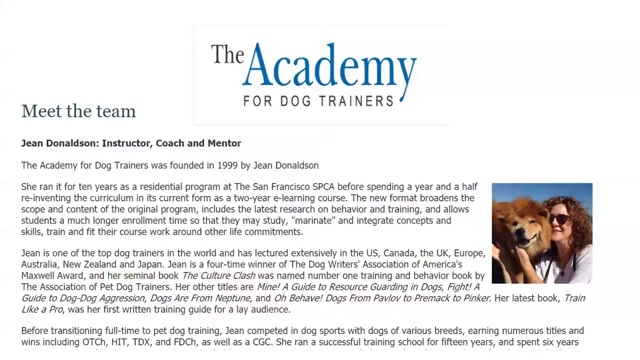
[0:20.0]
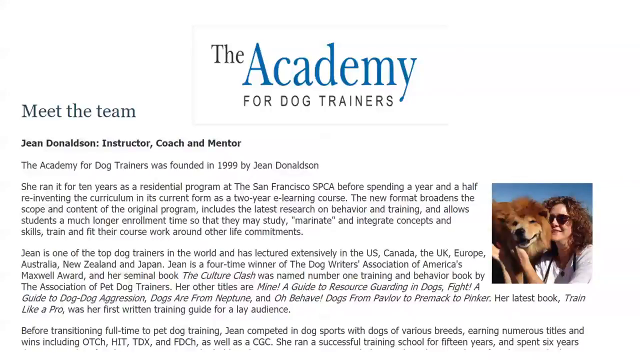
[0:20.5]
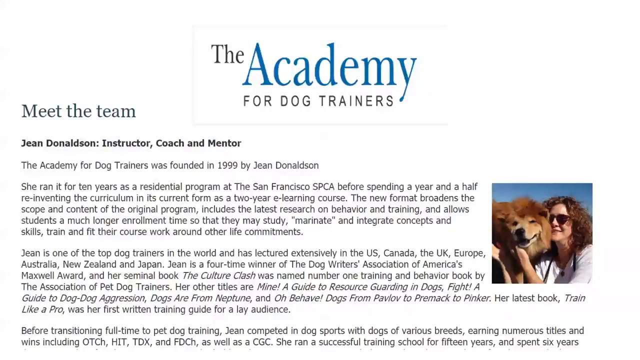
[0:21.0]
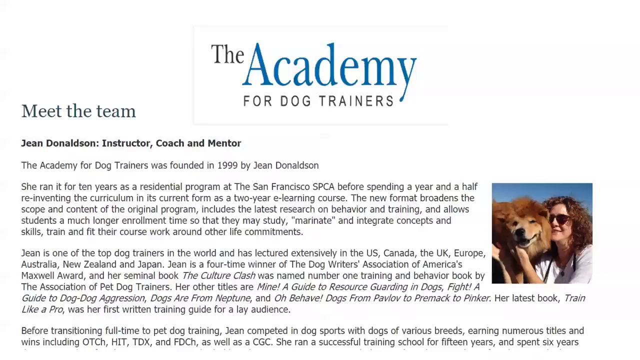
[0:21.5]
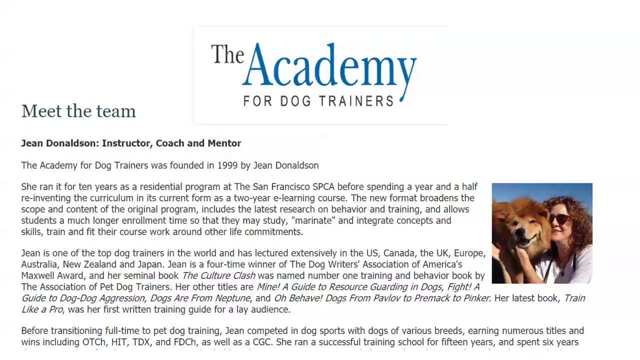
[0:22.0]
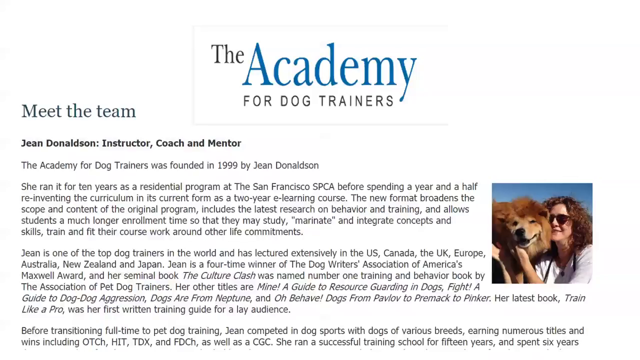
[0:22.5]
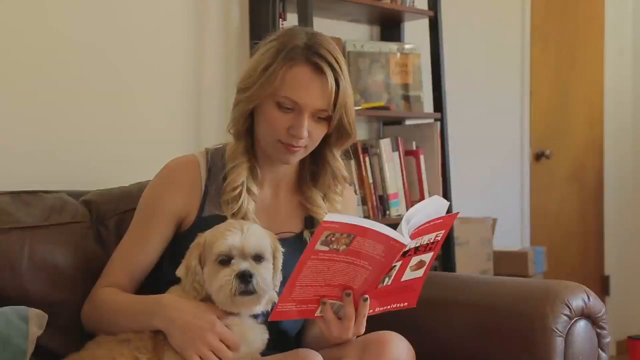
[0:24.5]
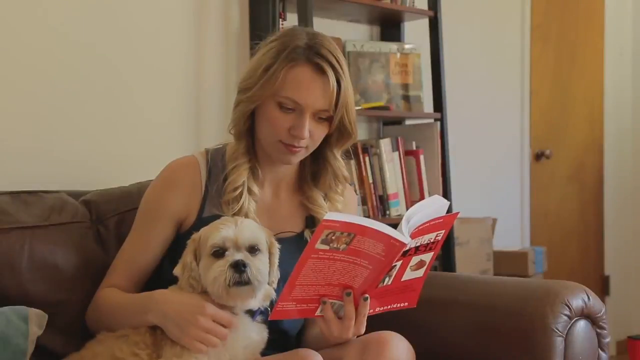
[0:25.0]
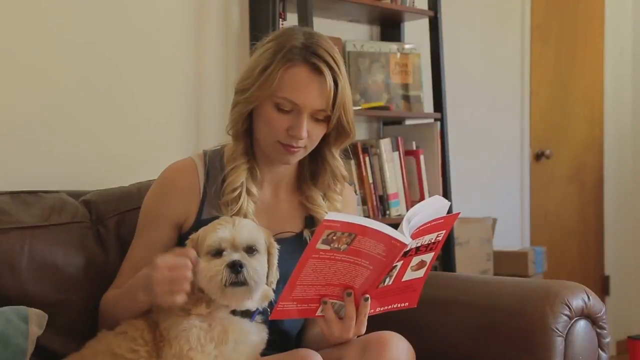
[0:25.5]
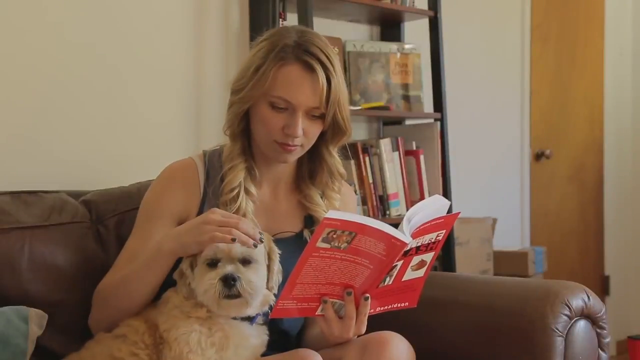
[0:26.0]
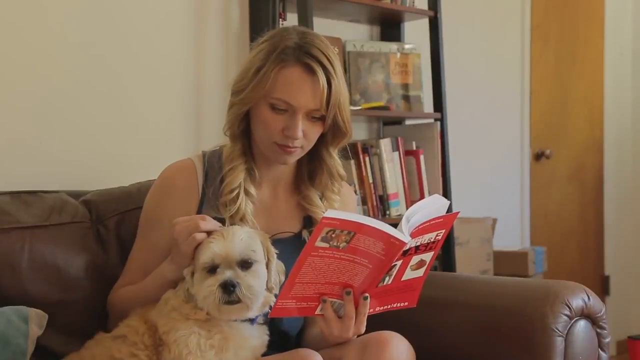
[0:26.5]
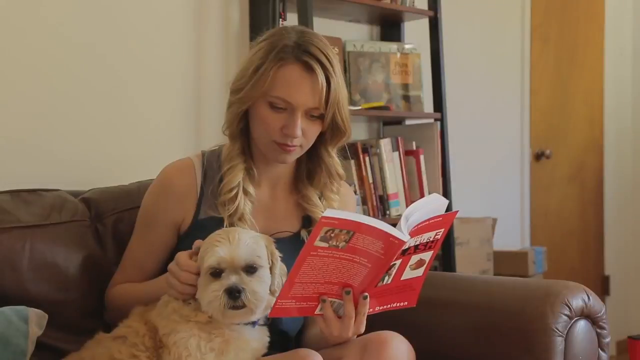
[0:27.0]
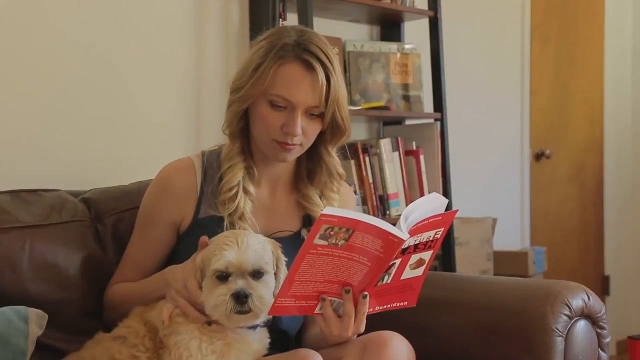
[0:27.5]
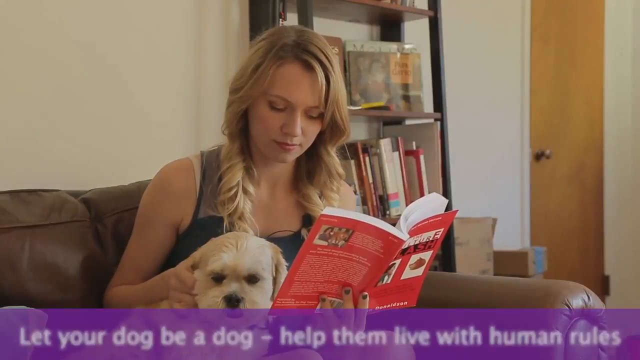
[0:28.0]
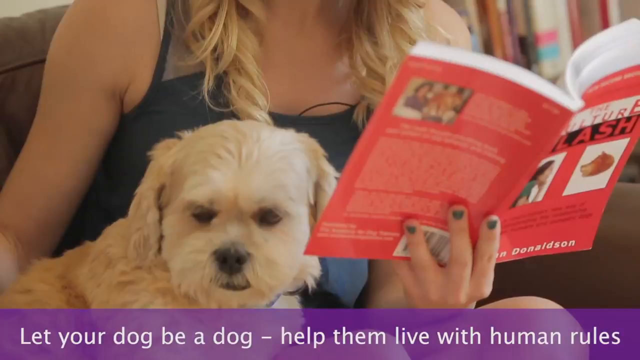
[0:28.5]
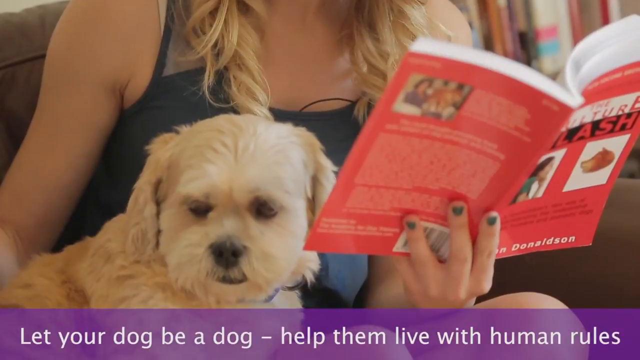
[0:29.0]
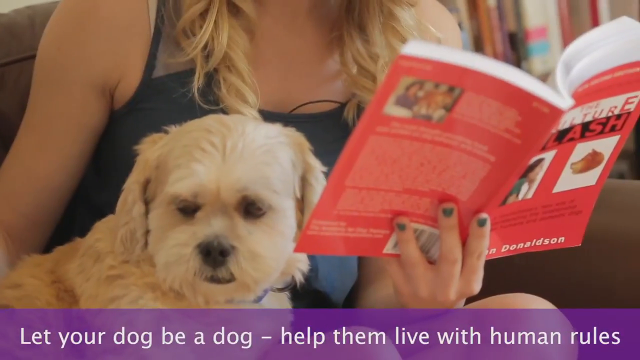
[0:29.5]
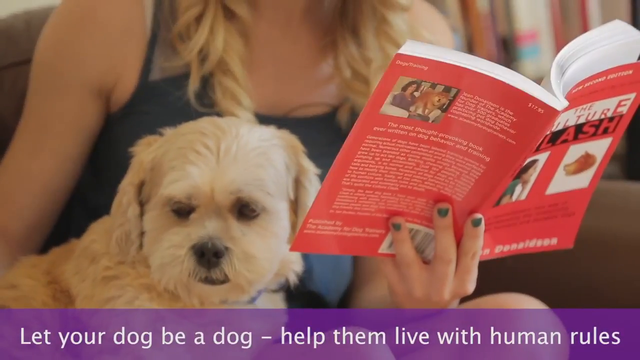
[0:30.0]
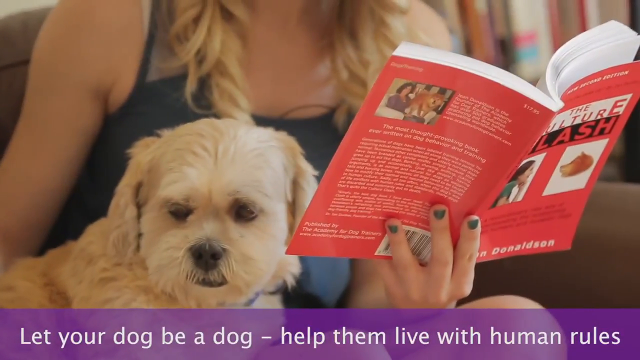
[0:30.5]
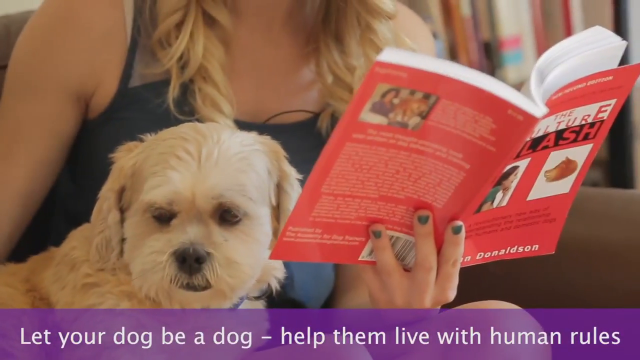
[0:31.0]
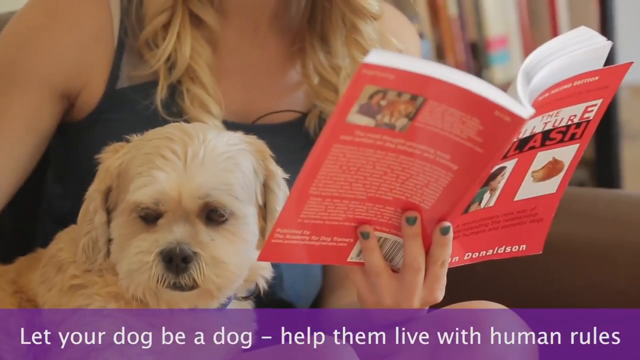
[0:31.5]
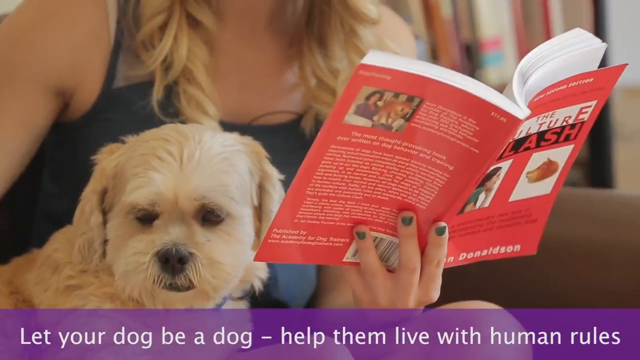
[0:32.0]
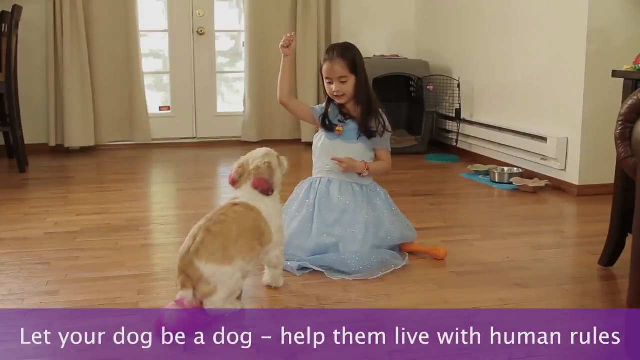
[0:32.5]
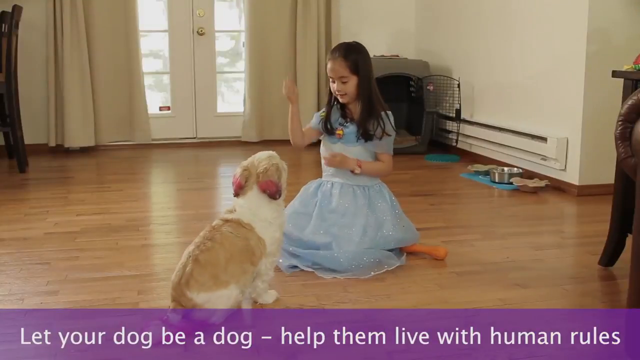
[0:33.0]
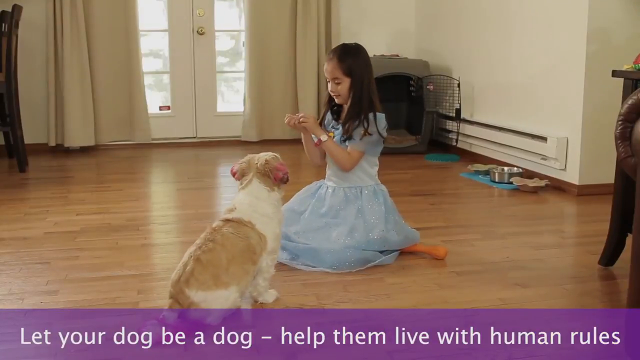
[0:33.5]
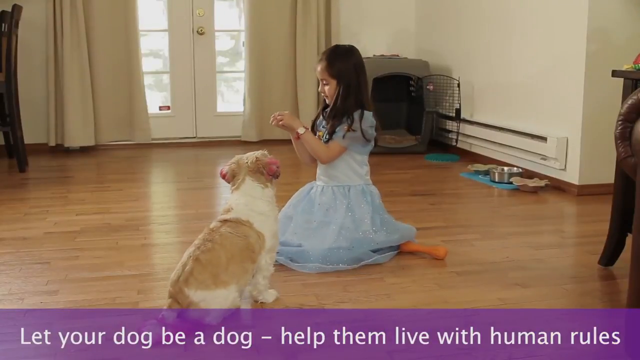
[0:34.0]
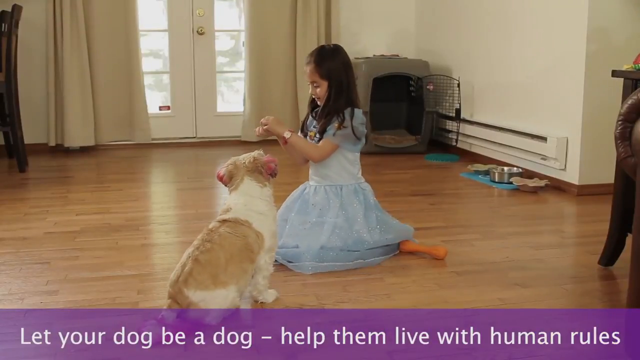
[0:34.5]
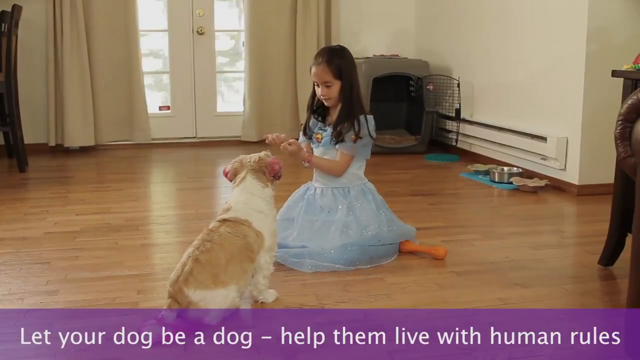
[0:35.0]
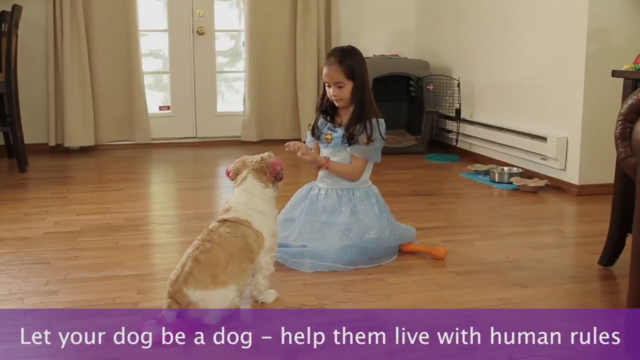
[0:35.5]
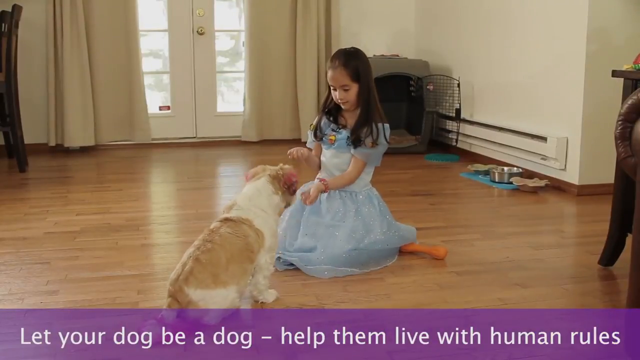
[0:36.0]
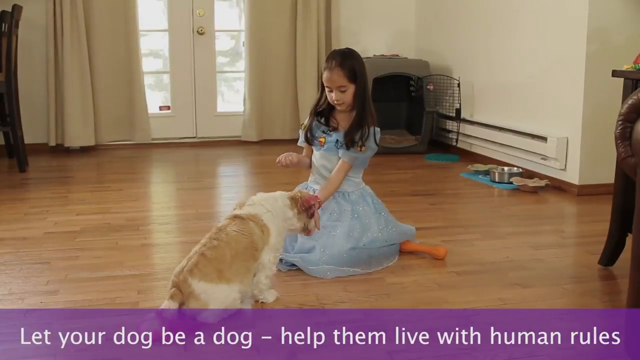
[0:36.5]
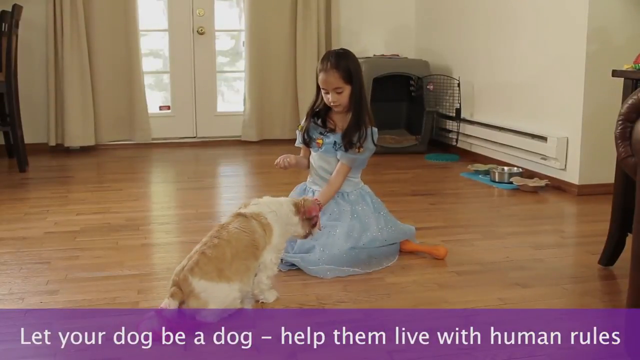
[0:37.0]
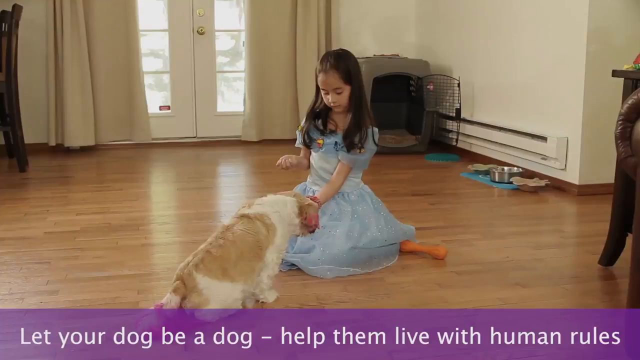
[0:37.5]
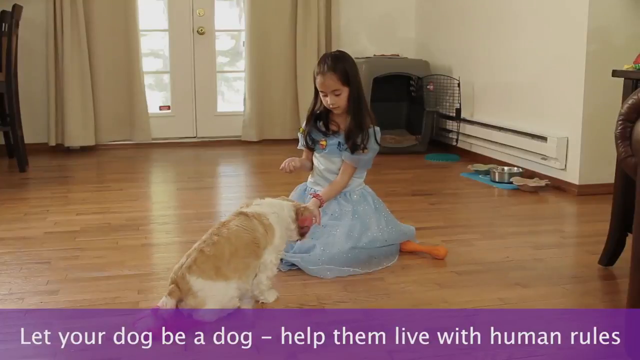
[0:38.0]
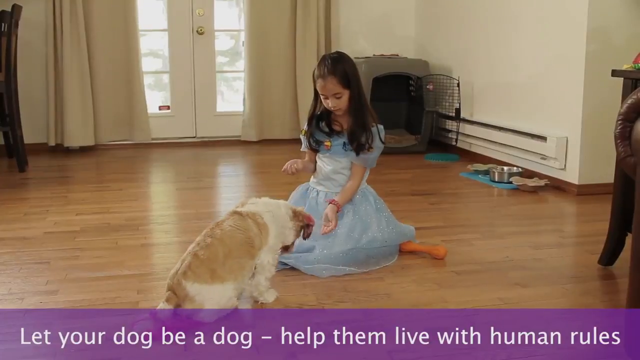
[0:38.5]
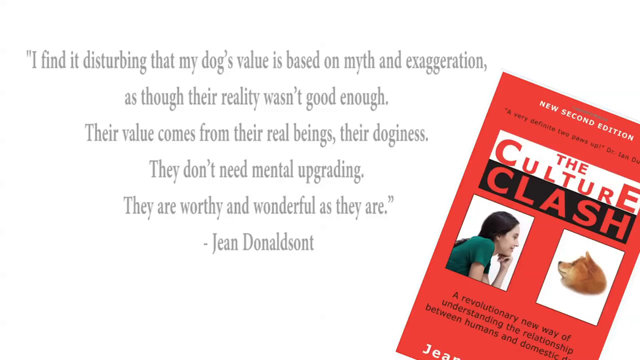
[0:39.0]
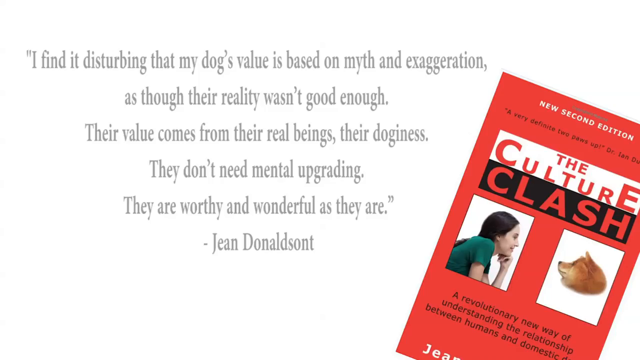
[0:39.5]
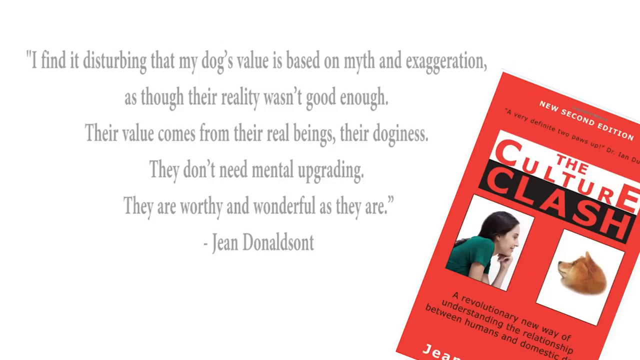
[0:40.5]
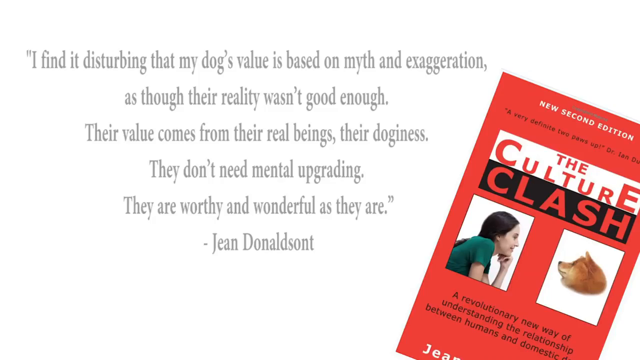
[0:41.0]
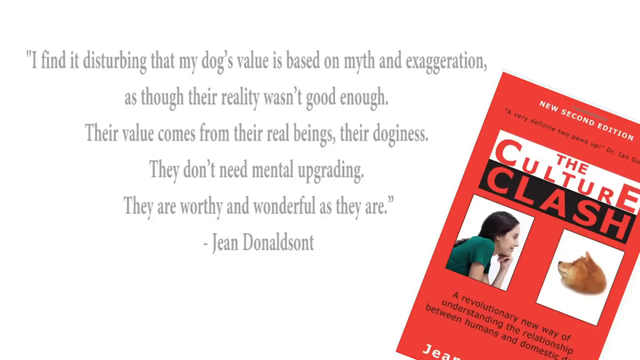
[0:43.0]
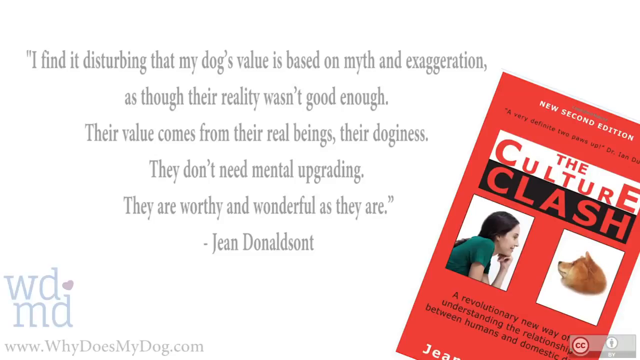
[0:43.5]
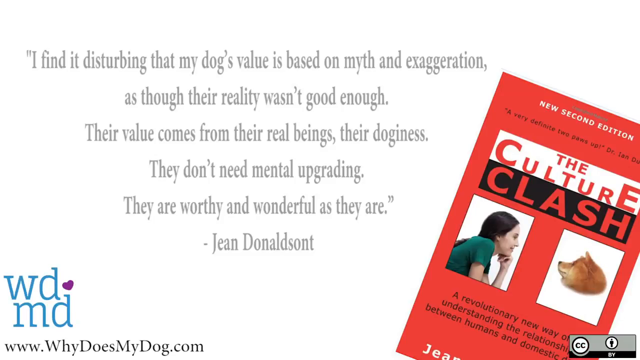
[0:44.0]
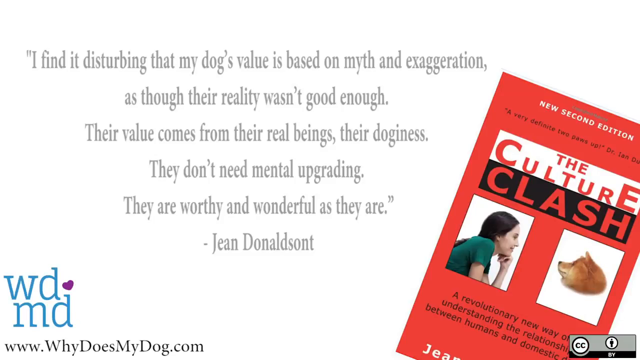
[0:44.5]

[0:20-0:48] Text mentioning the Academy for Dog Trainers appears, along with a picture of a woman with a dog. The woman wears dark sunshades, and text beside her reads "June Donatson, instructor, coach and mentor". A longer block of text follows, beginning "The Academy for Dog Trainers was founded in 1999 by June Donatson", describing the academy's history, her lectures, awards and other book titles. Next, a woman holds the book with a dog beside her, followed by the text "let your dog be a dog, help them live with human rules". A small girl in blue clothes feeds a dog. The final text is a quote beginning "I find it disturbing that my dog's" and ending "They don't need mental upgrading, they are worthy and wonderful as they are."